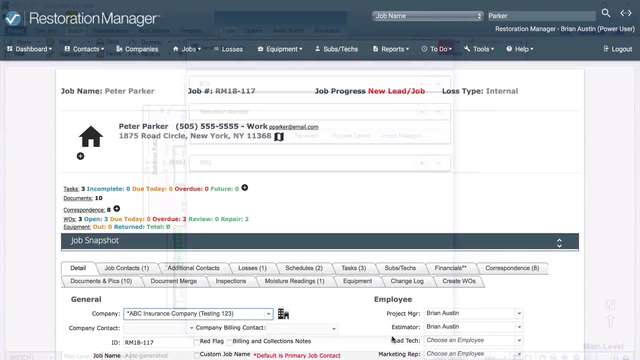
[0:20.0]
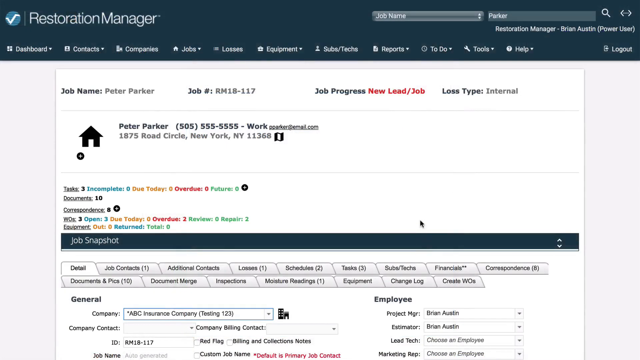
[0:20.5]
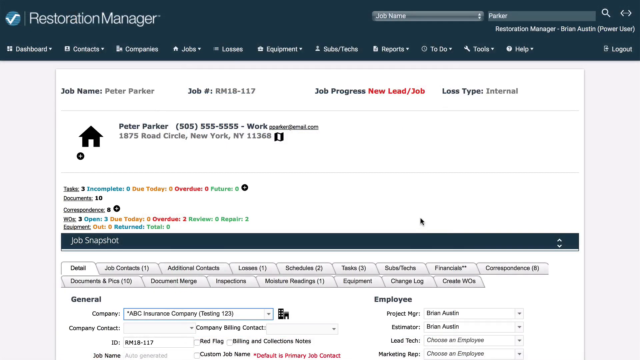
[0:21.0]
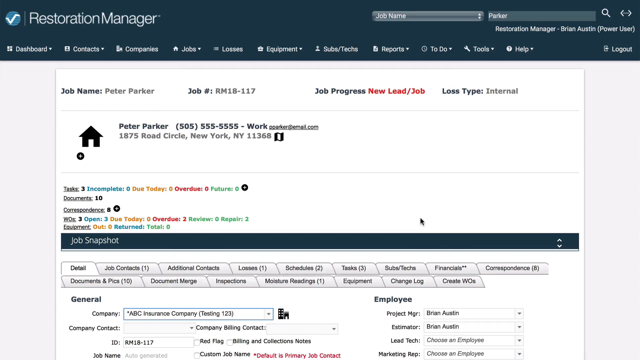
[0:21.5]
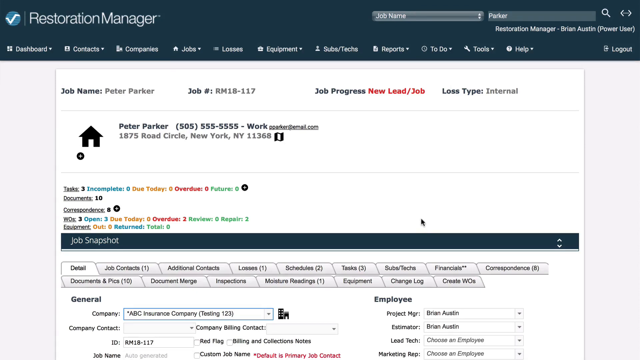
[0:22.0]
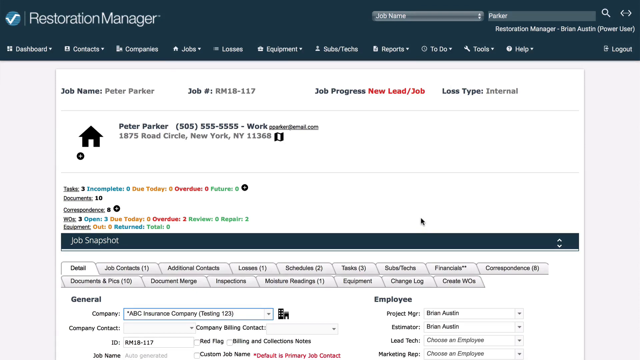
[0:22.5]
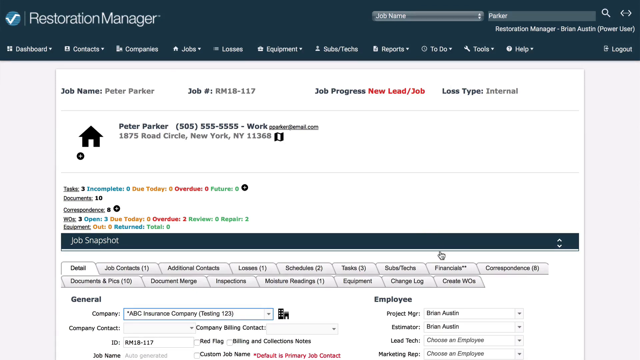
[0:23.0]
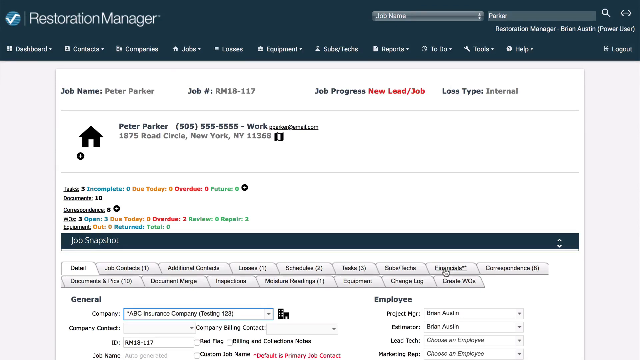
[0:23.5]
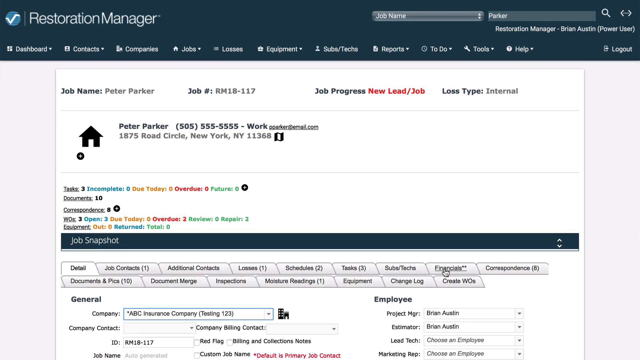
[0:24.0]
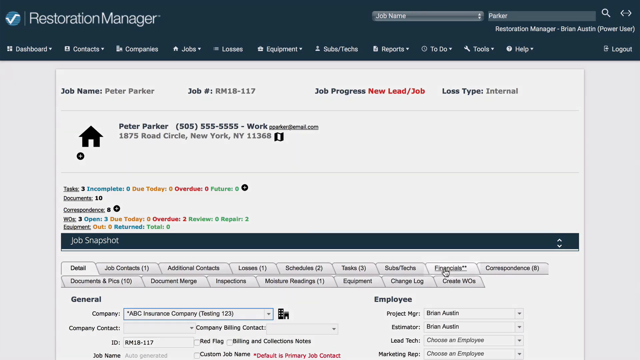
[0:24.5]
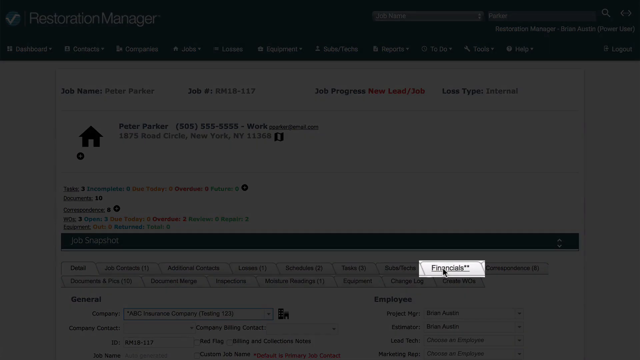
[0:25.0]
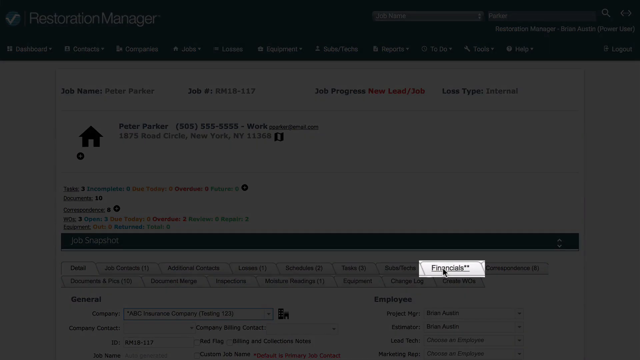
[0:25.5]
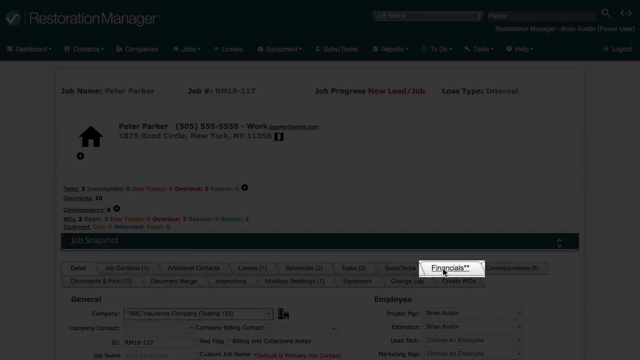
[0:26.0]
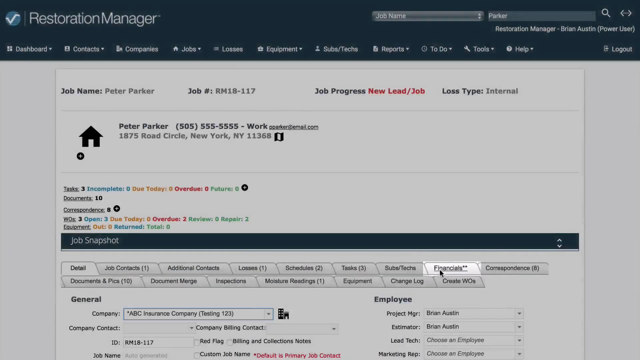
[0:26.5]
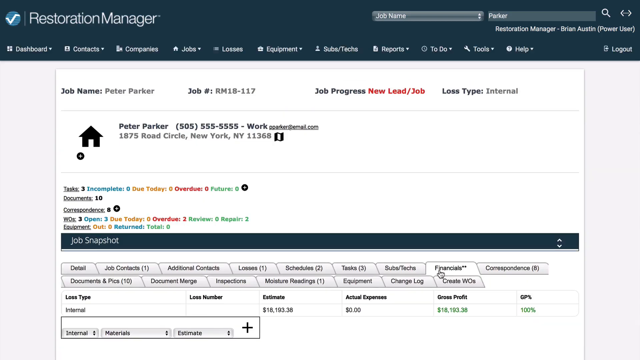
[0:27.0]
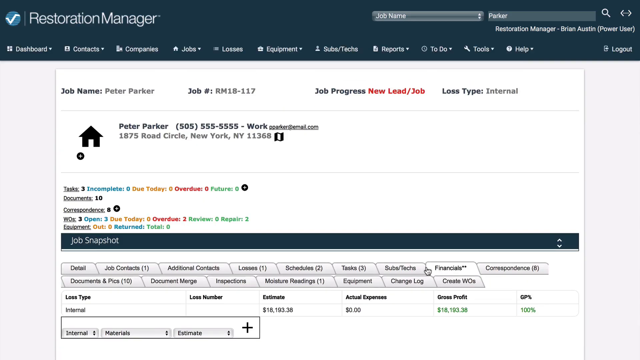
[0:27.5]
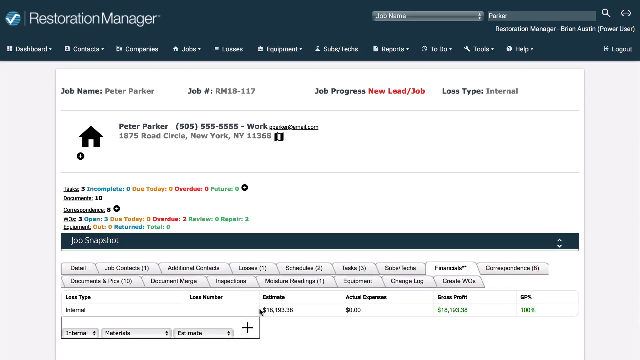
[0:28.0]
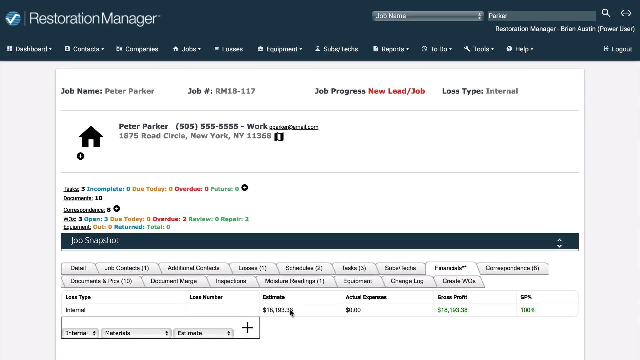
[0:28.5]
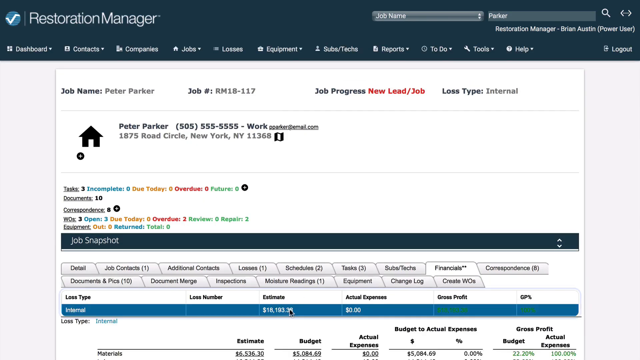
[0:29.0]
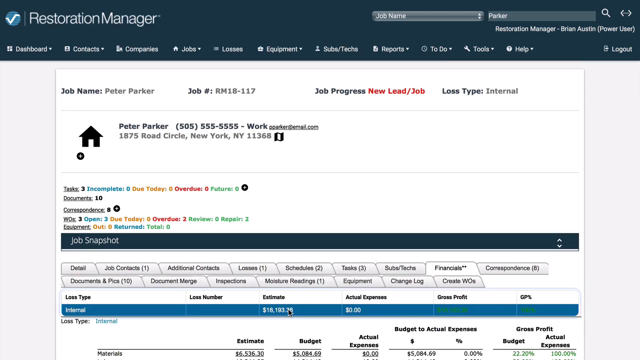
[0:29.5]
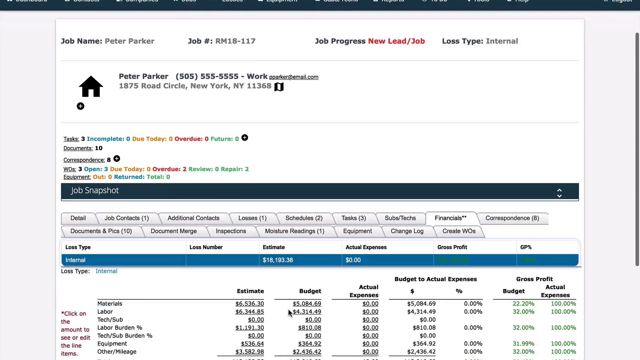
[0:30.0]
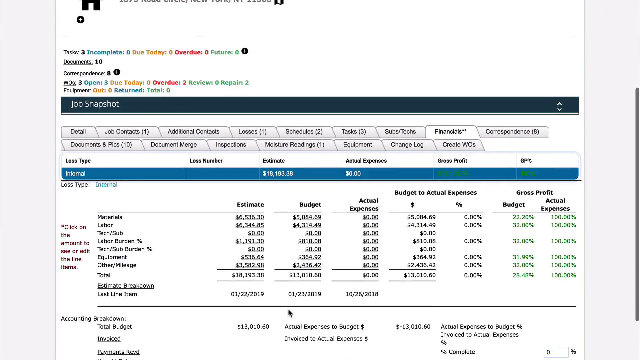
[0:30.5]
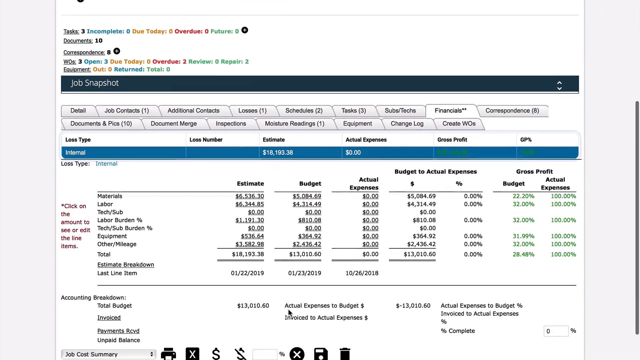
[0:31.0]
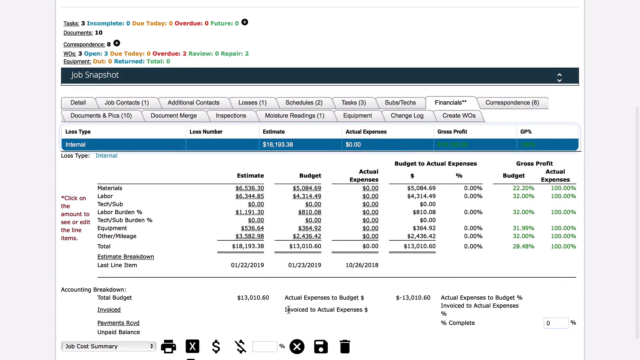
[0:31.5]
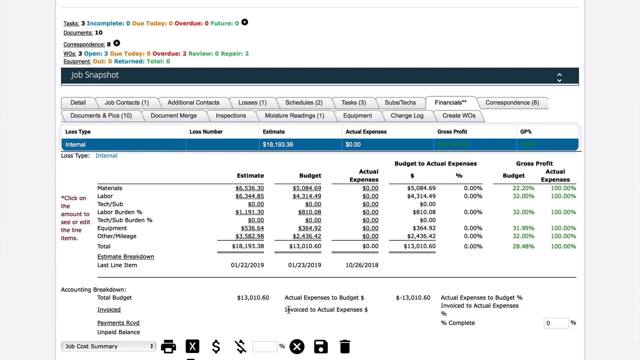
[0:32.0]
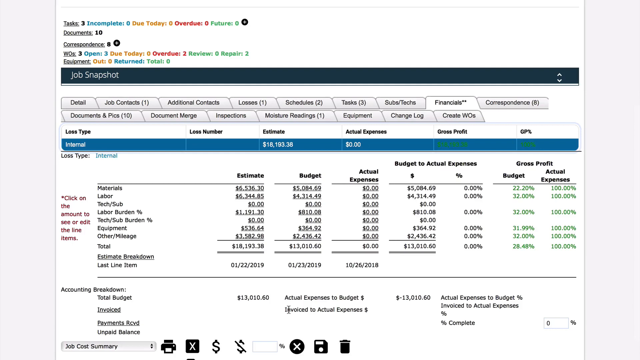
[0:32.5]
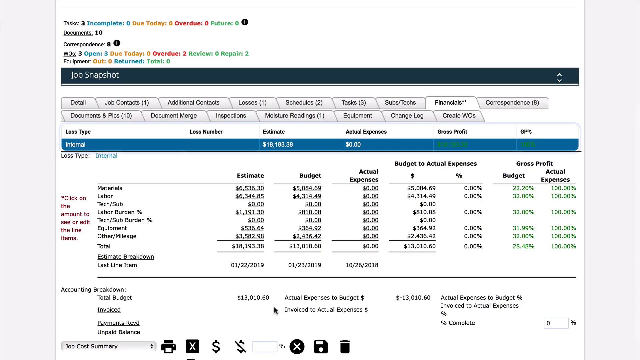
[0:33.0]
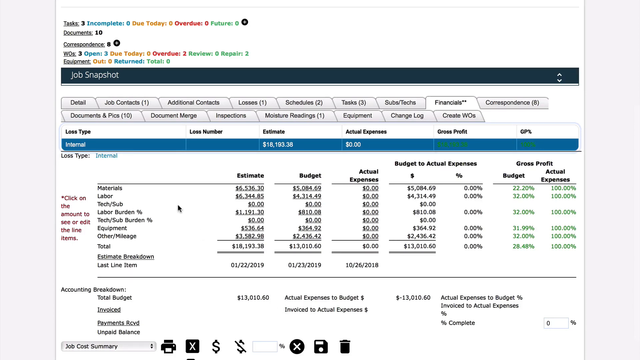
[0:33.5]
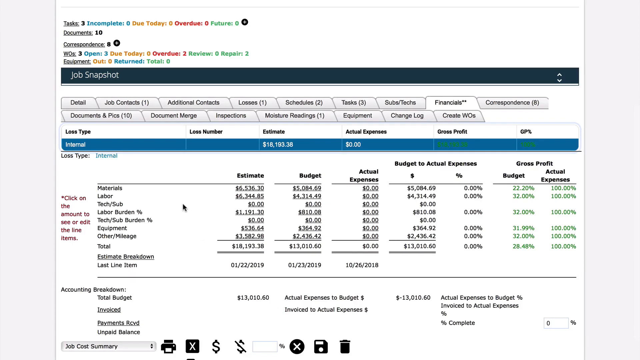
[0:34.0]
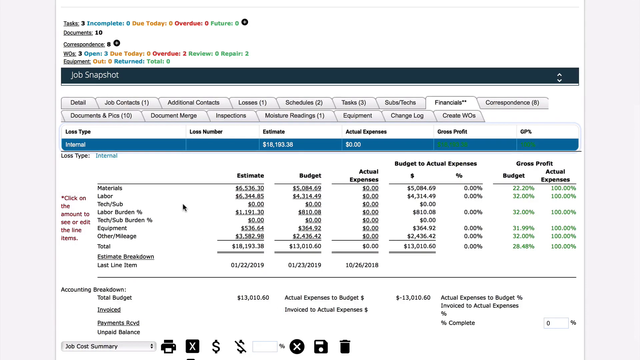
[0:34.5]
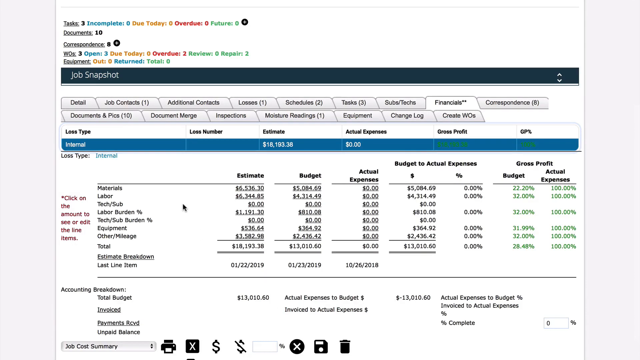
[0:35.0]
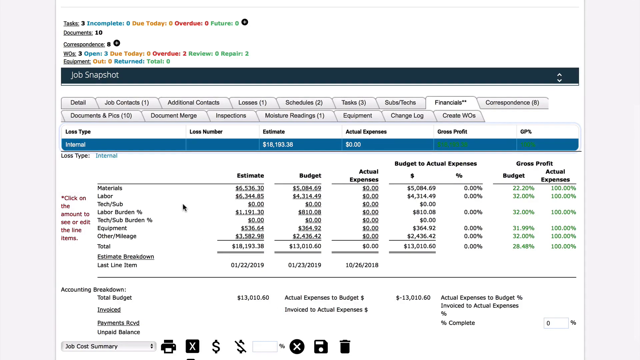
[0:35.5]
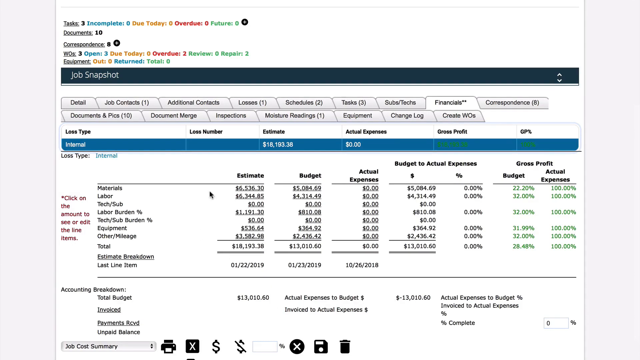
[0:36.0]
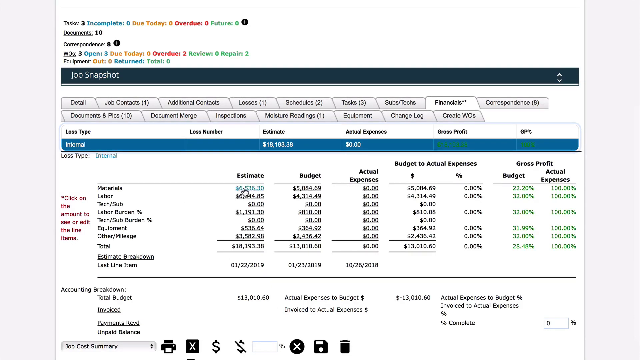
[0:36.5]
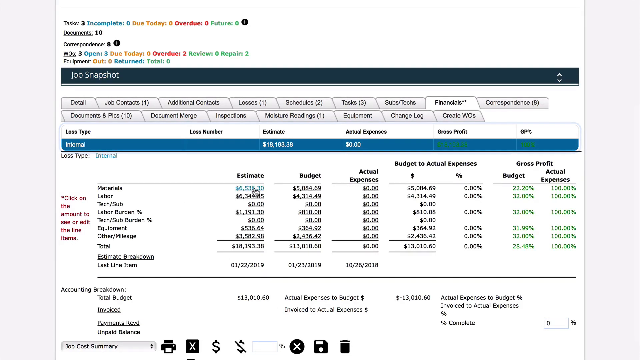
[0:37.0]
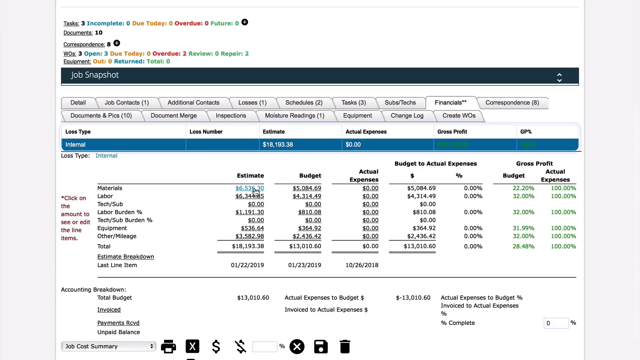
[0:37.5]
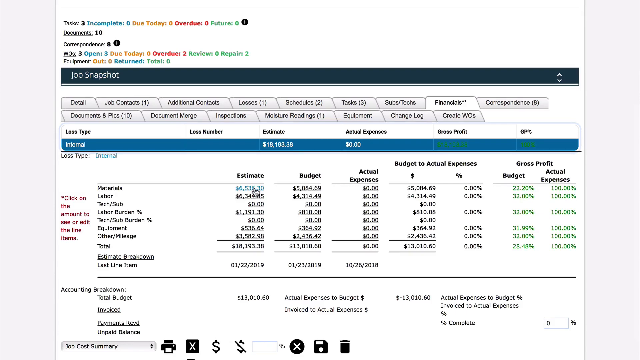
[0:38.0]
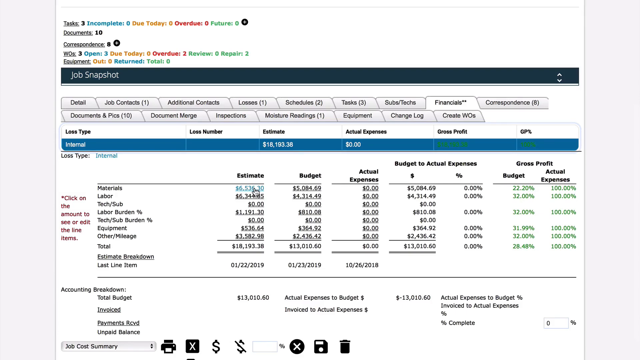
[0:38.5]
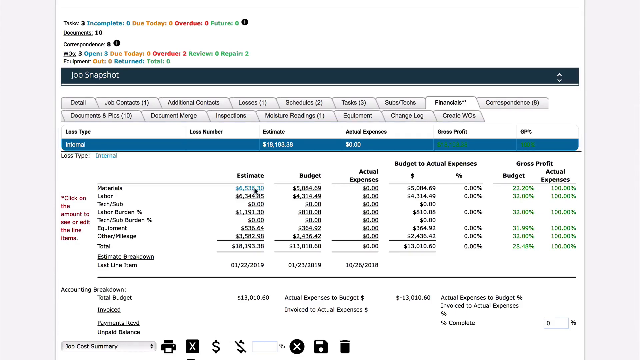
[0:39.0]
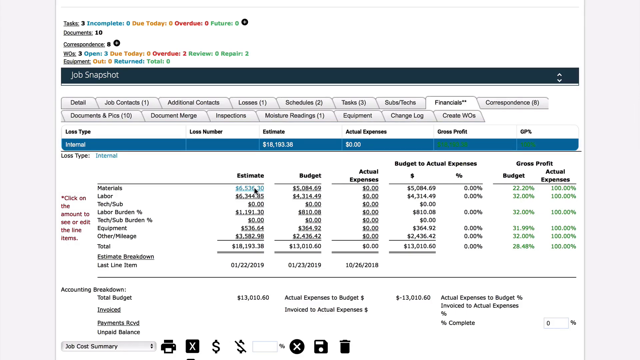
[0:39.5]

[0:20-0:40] Xacware's Xtimate estimate screen shows a job snapshot with an overview of materials and requests. The layout shows a worker profile, work, financials, job, new lead and estimate, along with labor and materials cost, an account breakdown, total budget and actual budget. The dashboard also lists job contact, losses, schedule, tasks and contacts. The current cost of materials is around $6,000, and the job name is Peter Parker, at 187 Rule Circle, New York, 11368. The task is incomplete. Documents, inspections, readings and equipment are shown.